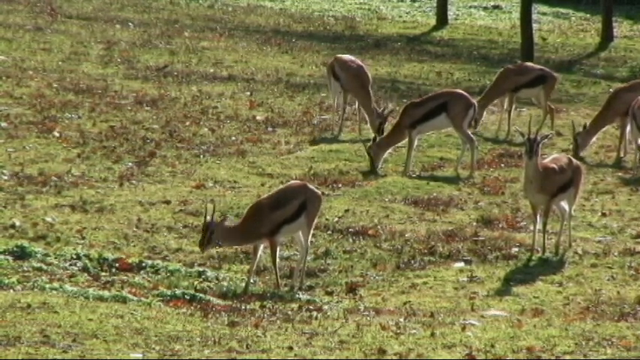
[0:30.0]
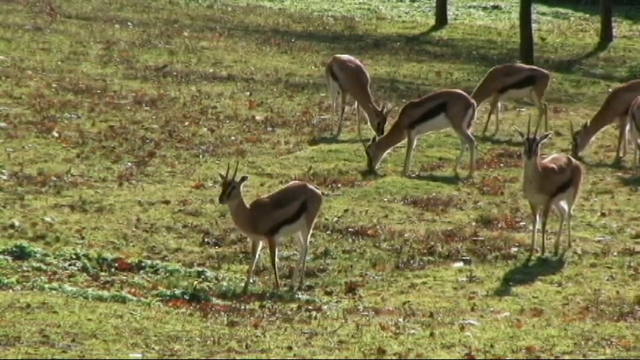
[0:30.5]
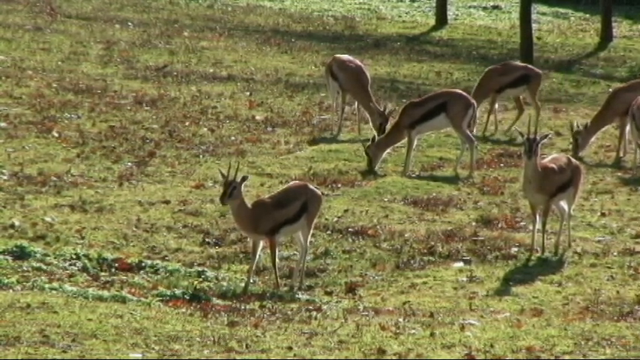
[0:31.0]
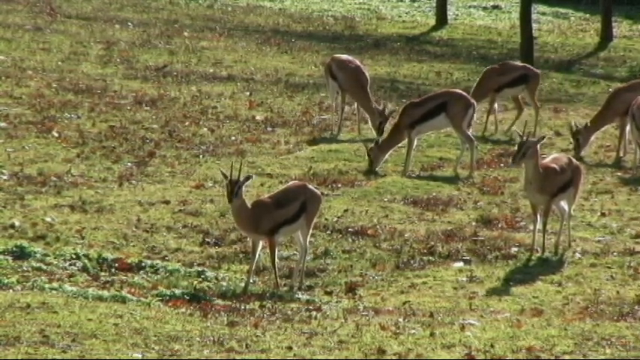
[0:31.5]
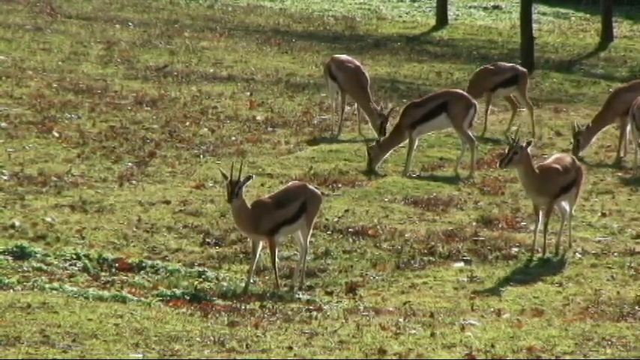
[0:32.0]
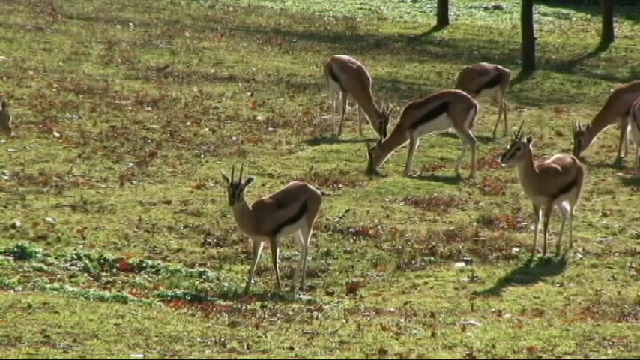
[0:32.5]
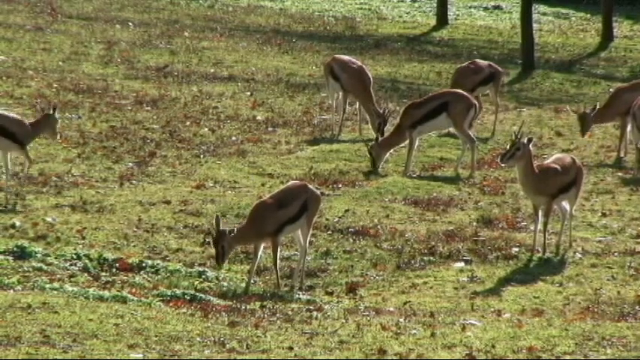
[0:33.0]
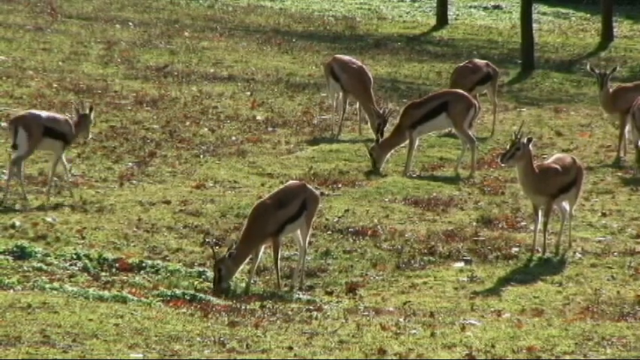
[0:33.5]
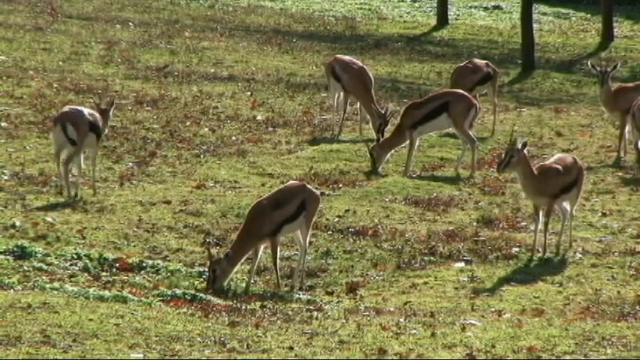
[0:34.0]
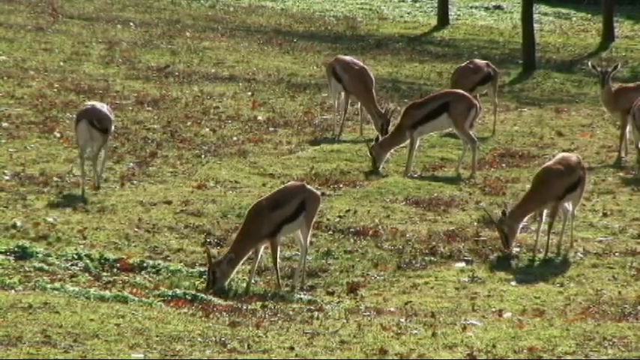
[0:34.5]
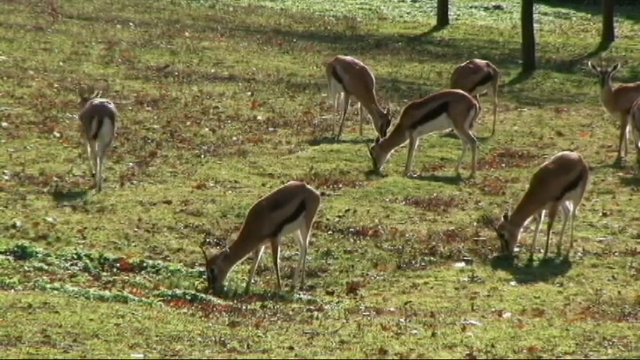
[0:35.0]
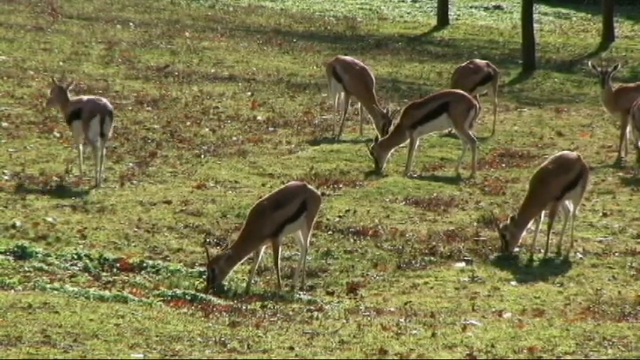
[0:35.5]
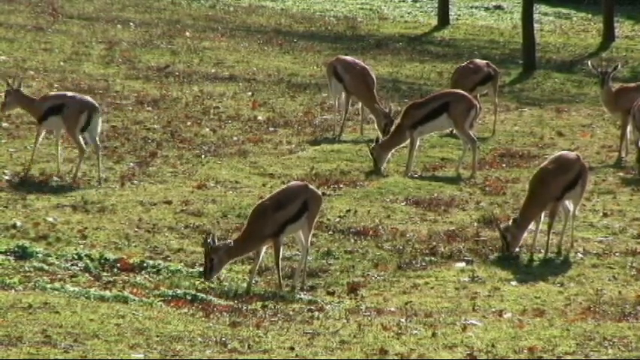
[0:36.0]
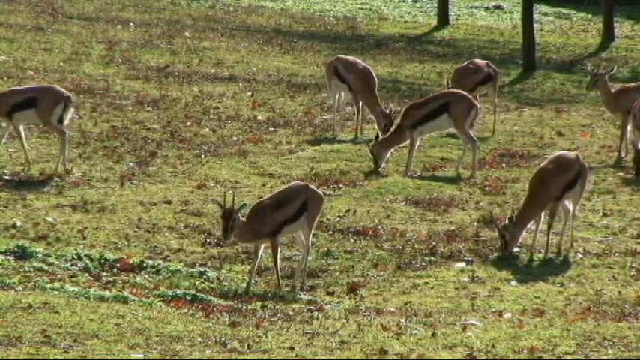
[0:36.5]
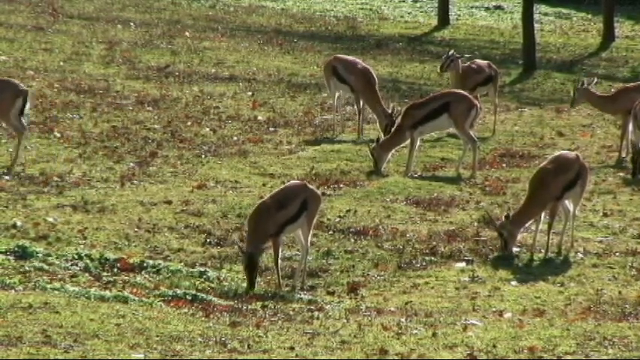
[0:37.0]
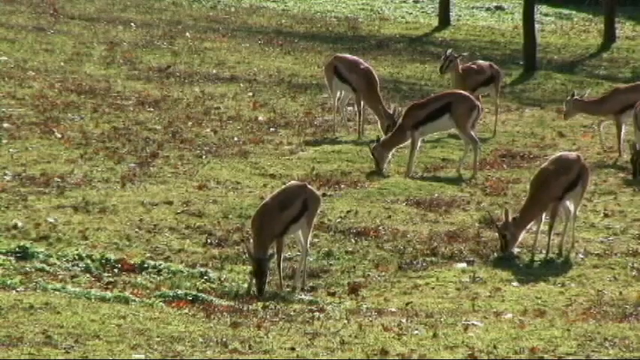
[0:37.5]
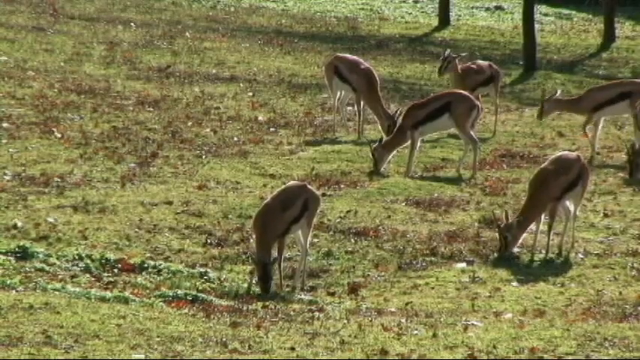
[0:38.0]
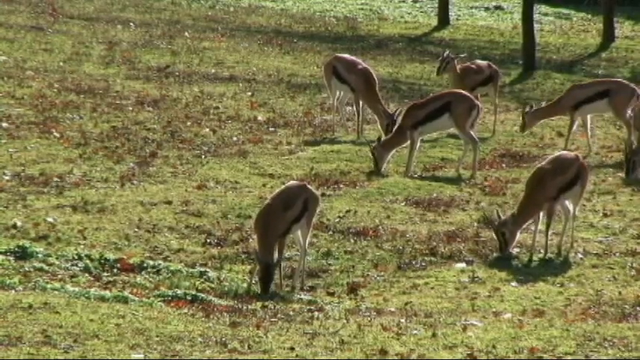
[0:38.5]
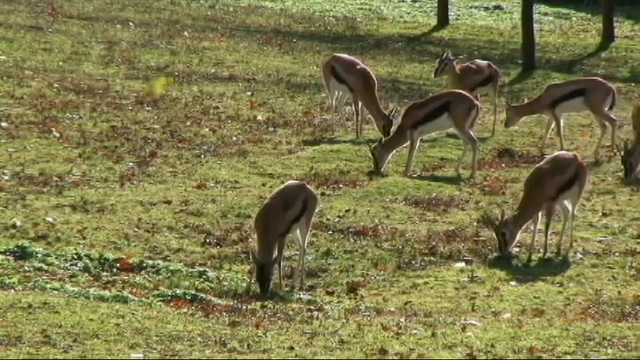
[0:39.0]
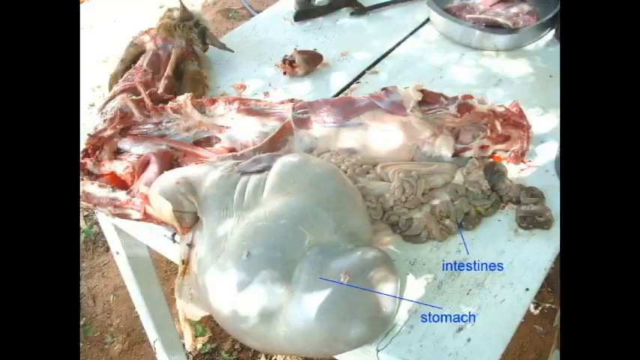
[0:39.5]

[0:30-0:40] What look like gazelles appear, seemingly around six of them, with one in the foreground and some in the background. The ones in the background seem to be grazing on something on the ground. The one in the foreground is kind of turned towards the camera and then begins to graze itself. One walks into frame from the left side, turns away from the camera and walks back out of the frame, while most of the gazelles just keep grazing. The video then quickly shows footage of what looks like an animal that is opened up, with some meat on a table, and cuts off there.